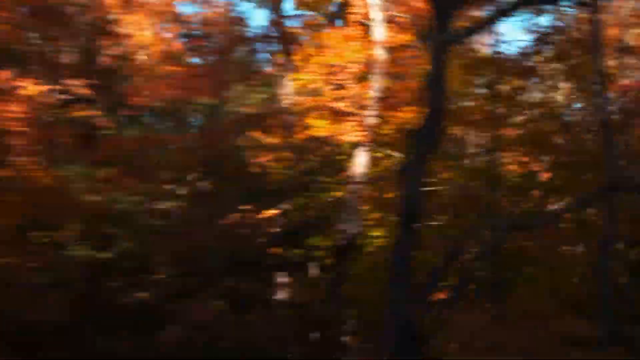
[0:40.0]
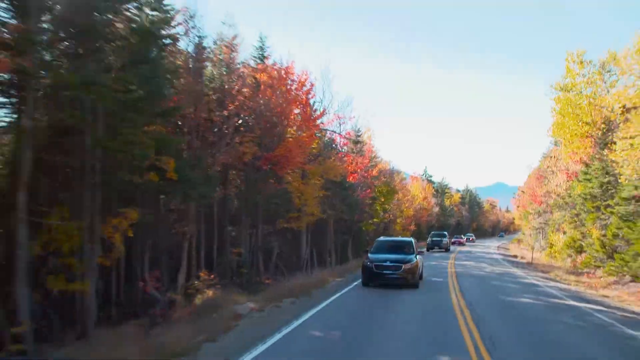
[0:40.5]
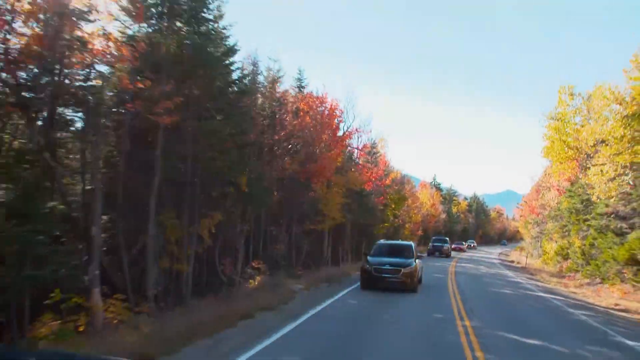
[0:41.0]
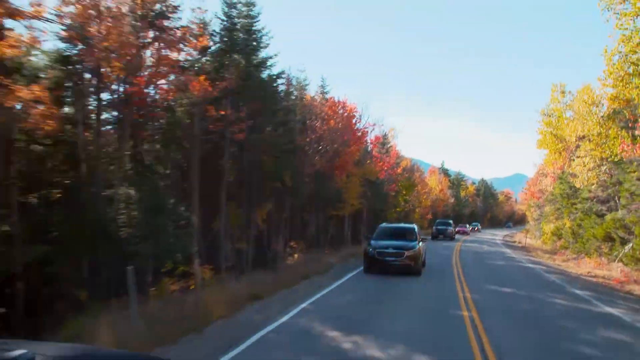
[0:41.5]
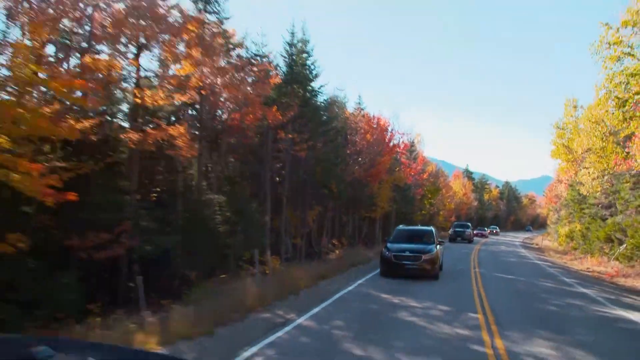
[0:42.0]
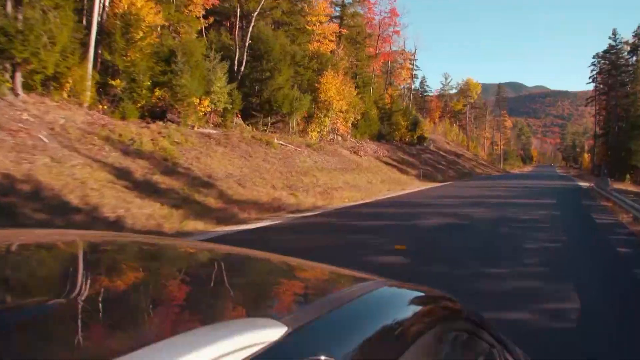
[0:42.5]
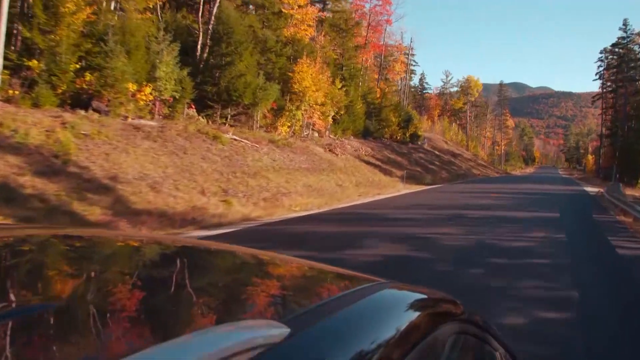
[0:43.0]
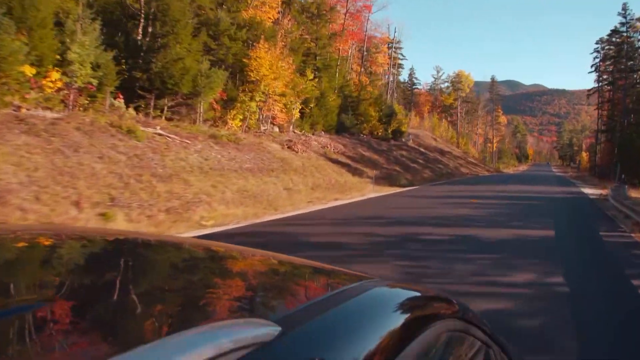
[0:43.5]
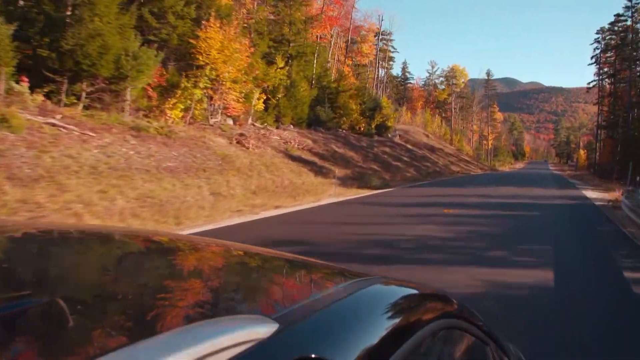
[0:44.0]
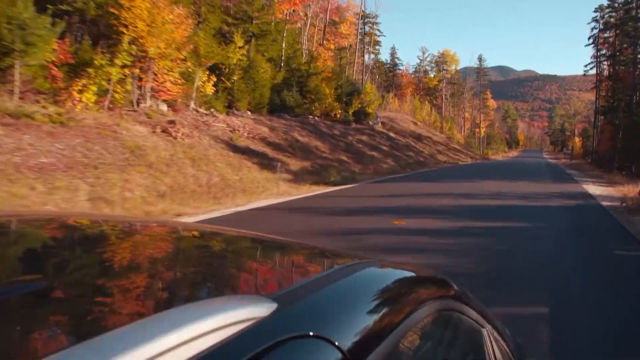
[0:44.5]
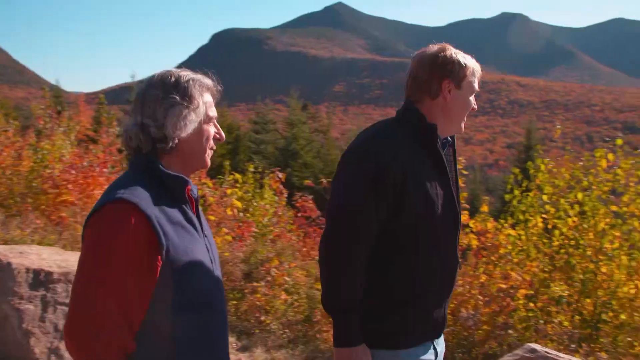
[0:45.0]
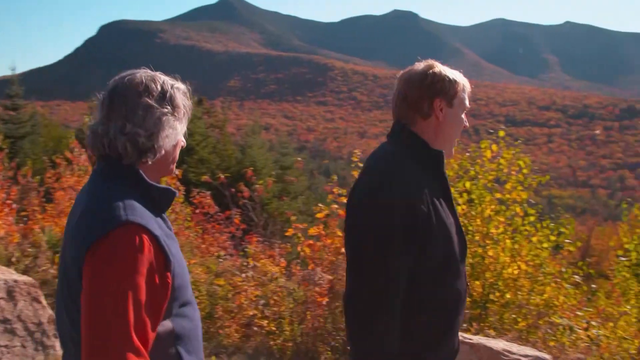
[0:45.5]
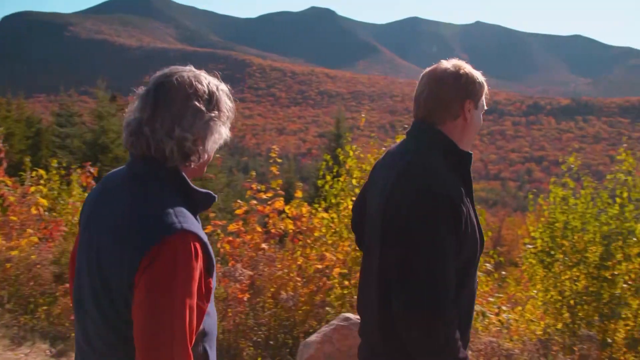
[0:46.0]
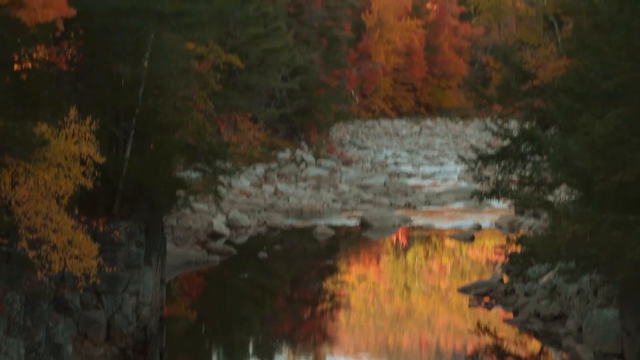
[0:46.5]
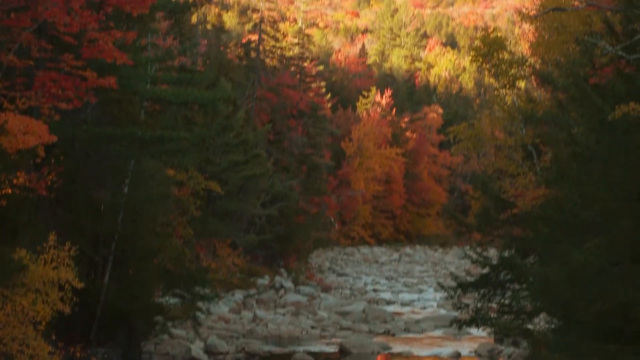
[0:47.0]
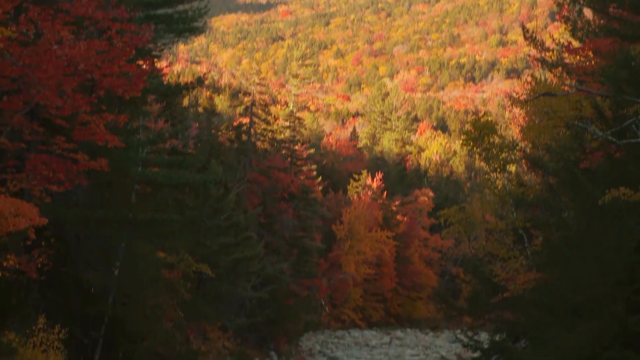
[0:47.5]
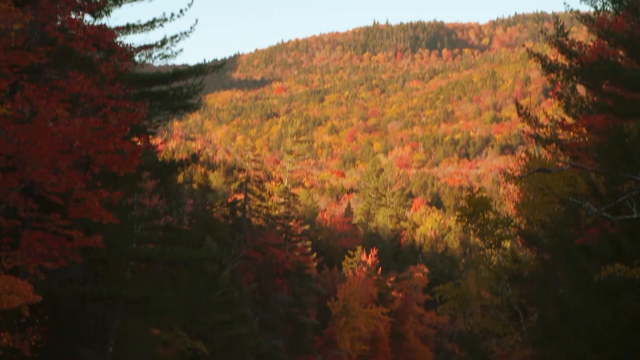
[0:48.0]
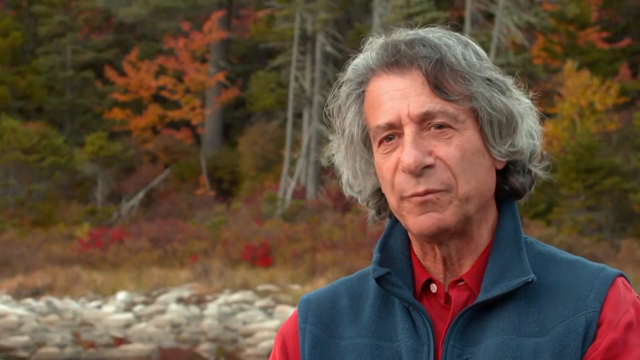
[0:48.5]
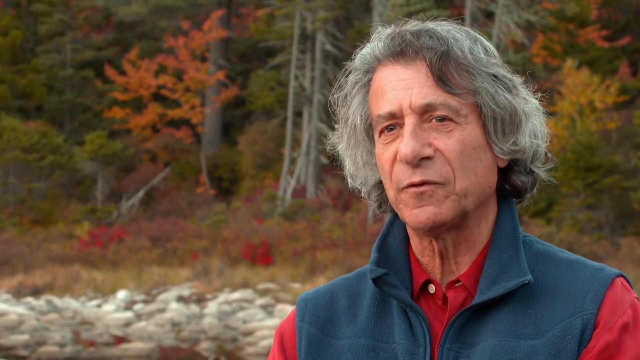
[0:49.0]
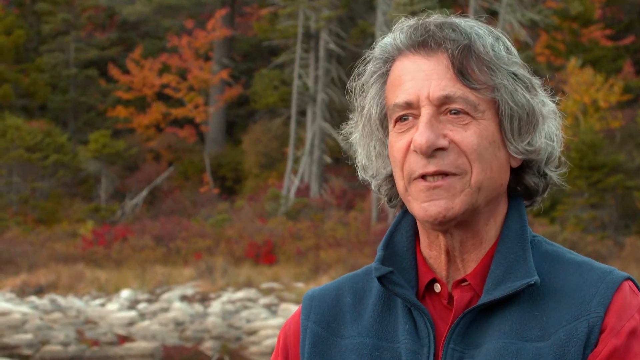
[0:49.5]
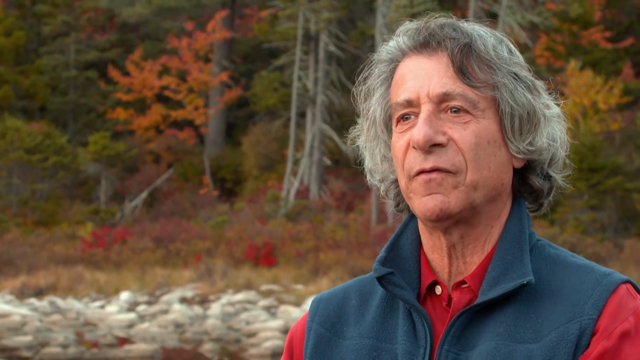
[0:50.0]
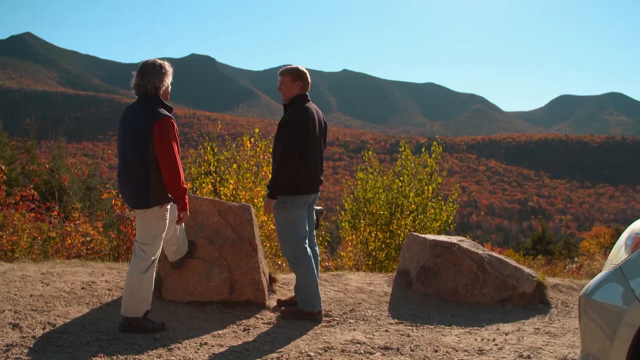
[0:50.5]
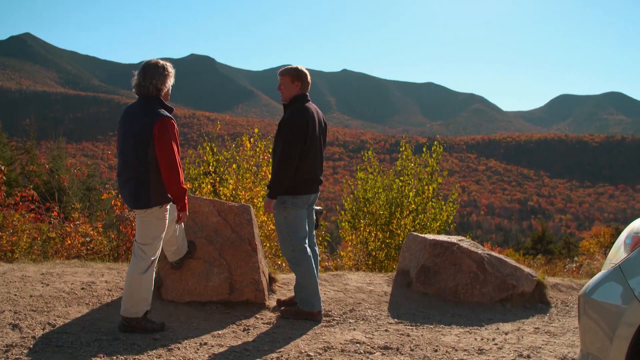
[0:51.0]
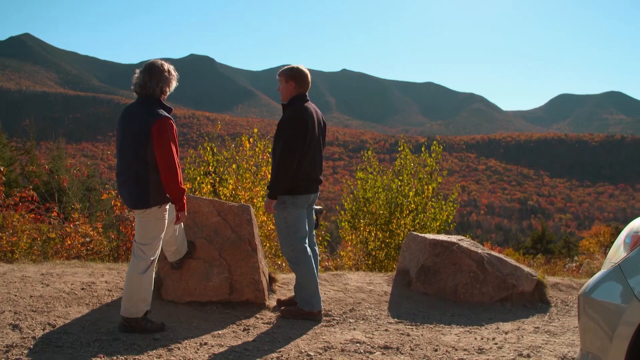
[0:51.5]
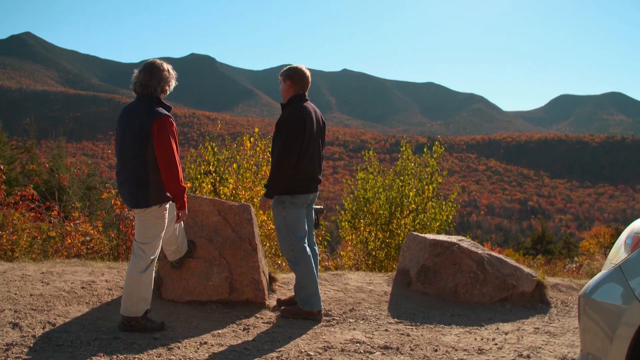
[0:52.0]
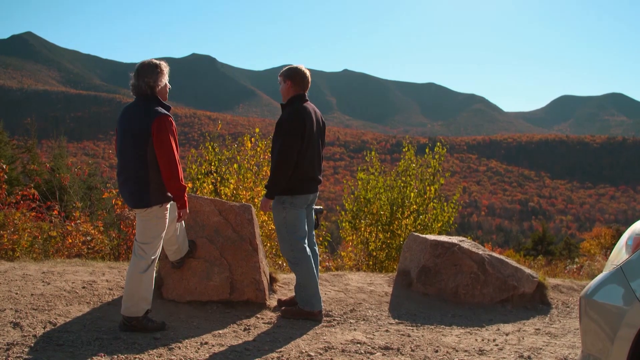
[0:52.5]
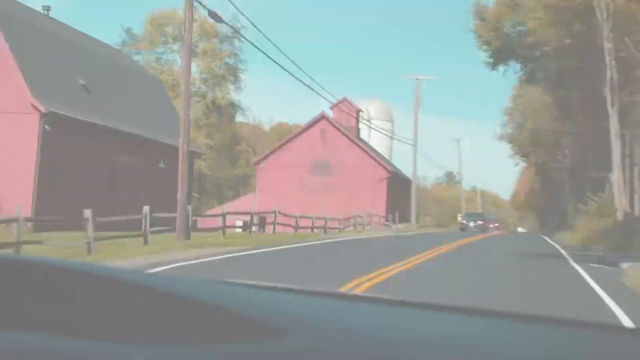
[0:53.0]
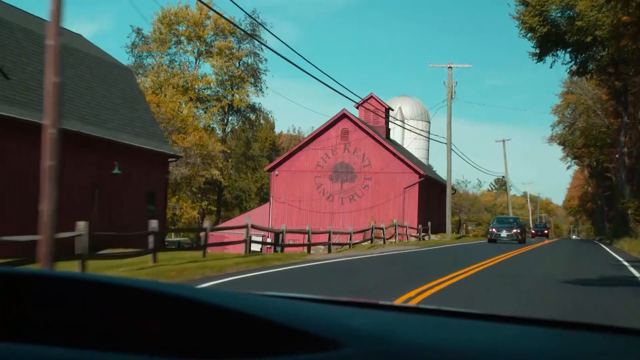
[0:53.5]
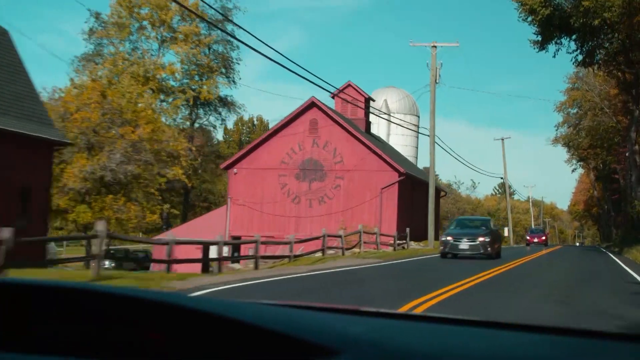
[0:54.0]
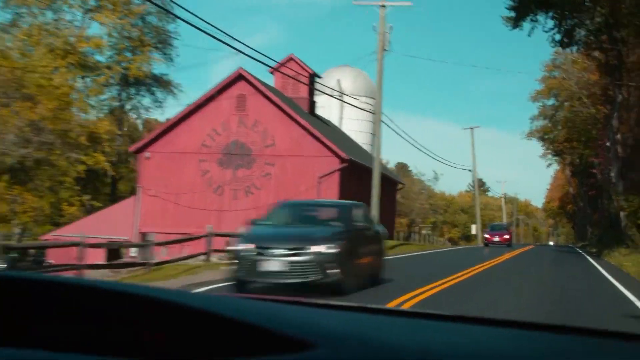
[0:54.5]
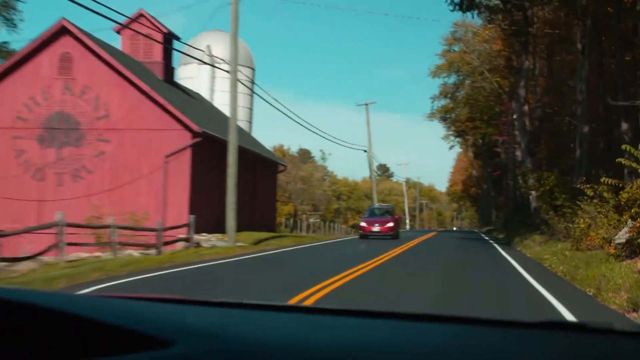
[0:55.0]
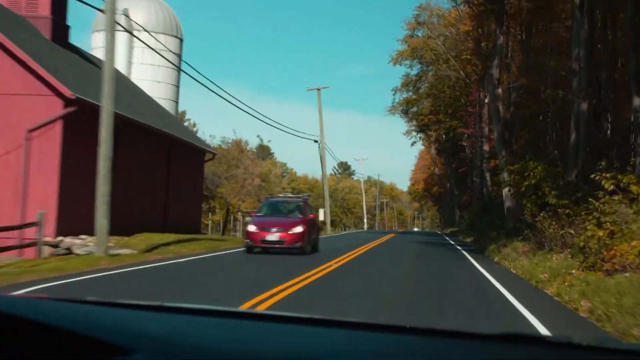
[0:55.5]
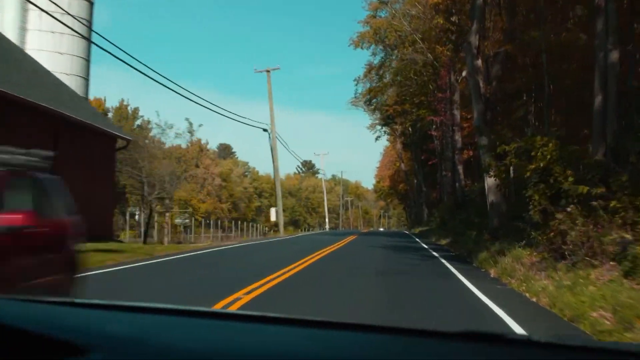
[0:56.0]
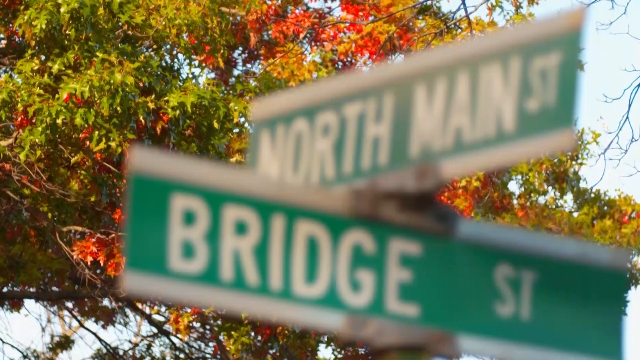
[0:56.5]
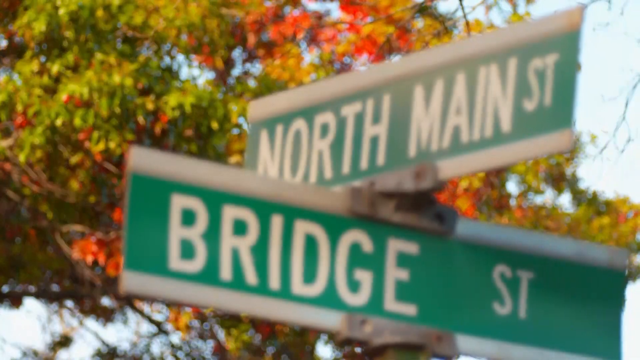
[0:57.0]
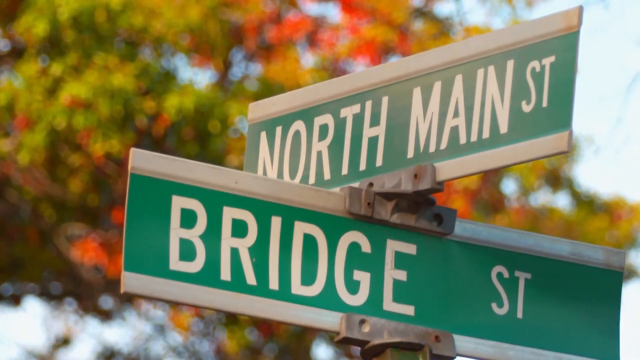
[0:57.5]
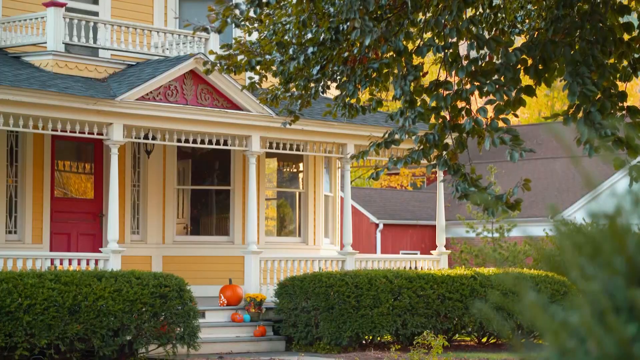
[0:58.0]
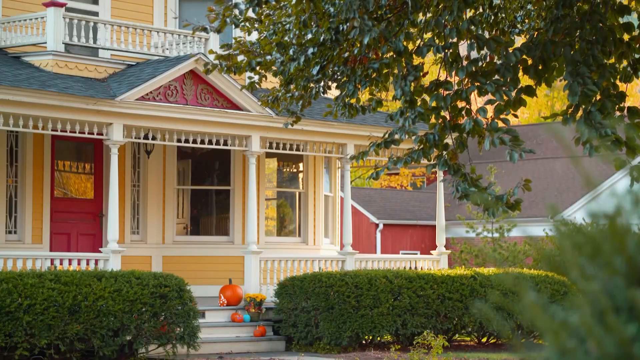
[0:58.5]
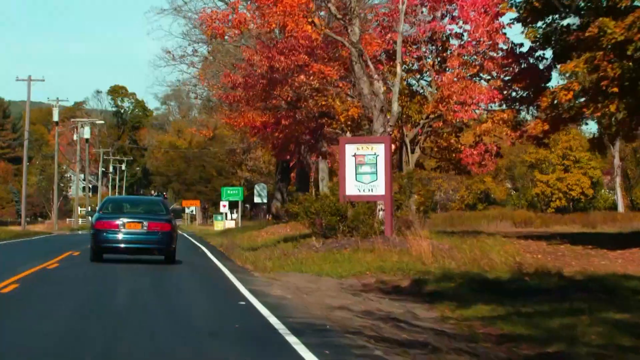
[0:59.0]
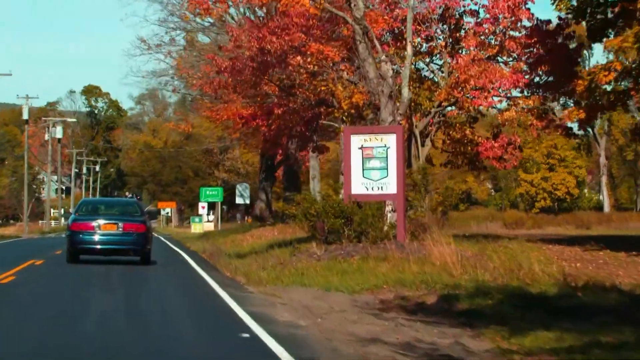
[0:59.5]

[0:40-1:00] Multicoloured autumn trees appear, then a car drives down a road beside the forest, and the bonnet of the car is visible. Two people walk together: a man with longish grey curly hair wearing a blue body warmer and a long-sleeved red top, and a man with short brown hair and a dark blue jacket. Mountains and trees are in the background. The grey-haired man then speaks to the camera, standing on the right-hand side of the screen. He wears a blue sleeveless top with its collar turned up and a red shirt underneath, buttoned almost to the top with the last white button left open. Autumn trees and trunks are in the background behind him.